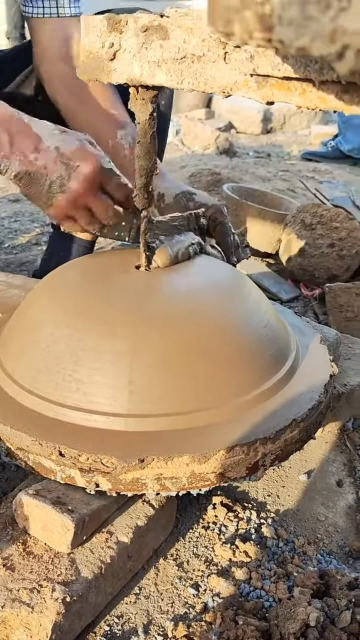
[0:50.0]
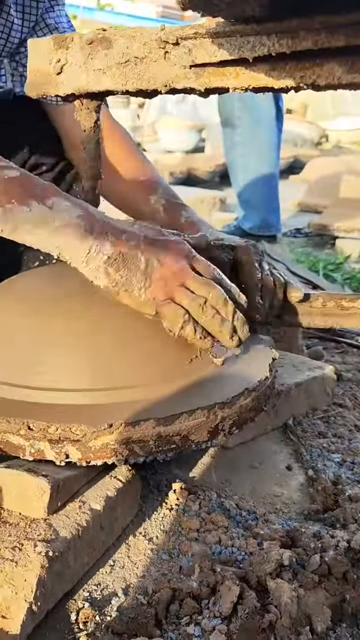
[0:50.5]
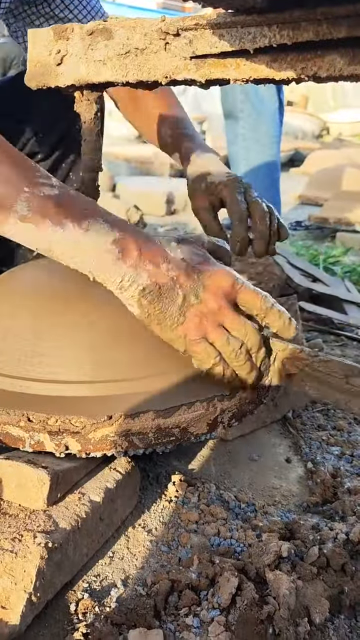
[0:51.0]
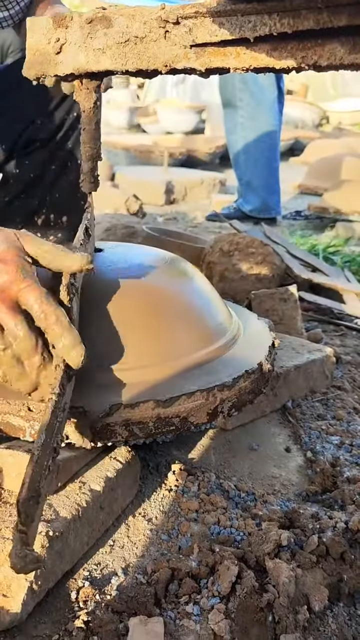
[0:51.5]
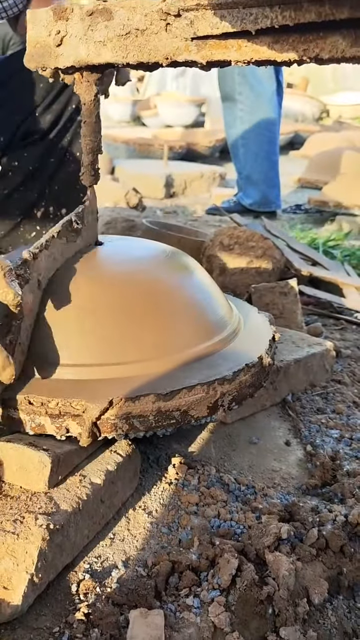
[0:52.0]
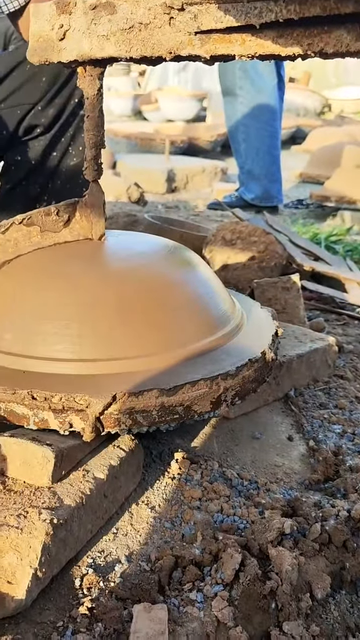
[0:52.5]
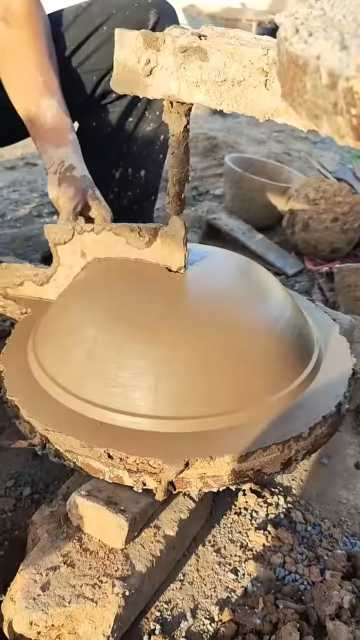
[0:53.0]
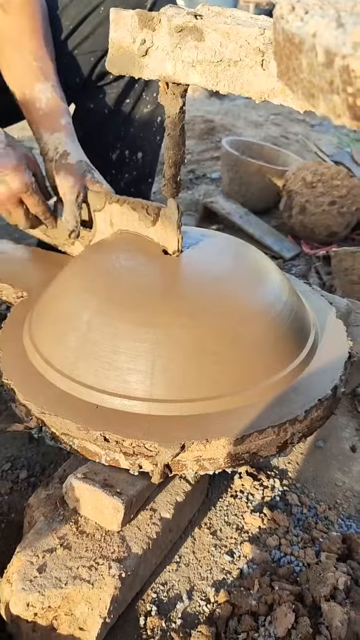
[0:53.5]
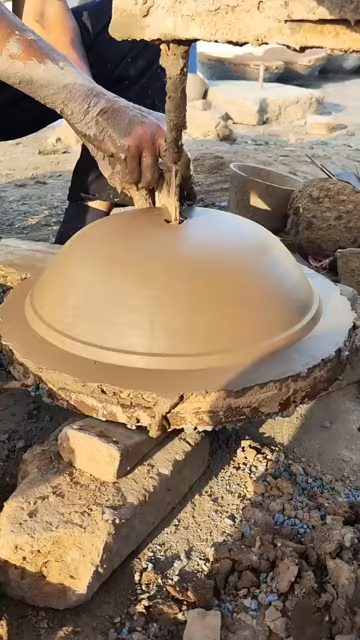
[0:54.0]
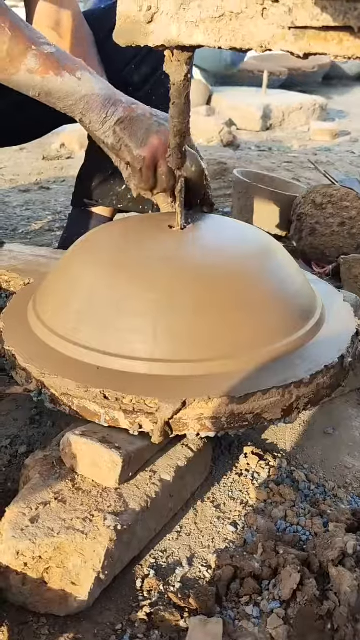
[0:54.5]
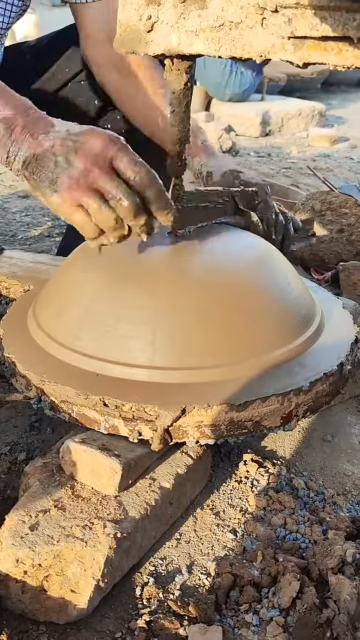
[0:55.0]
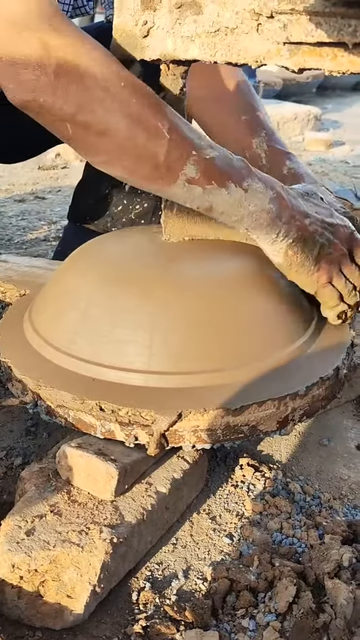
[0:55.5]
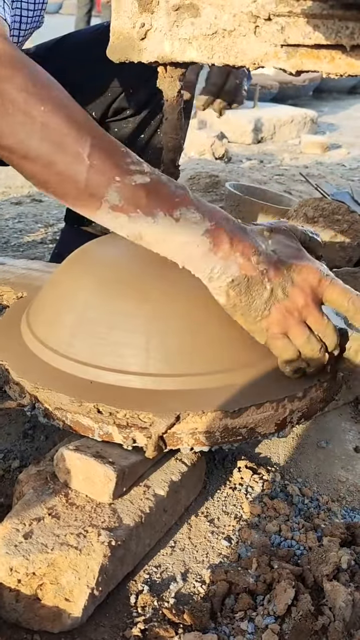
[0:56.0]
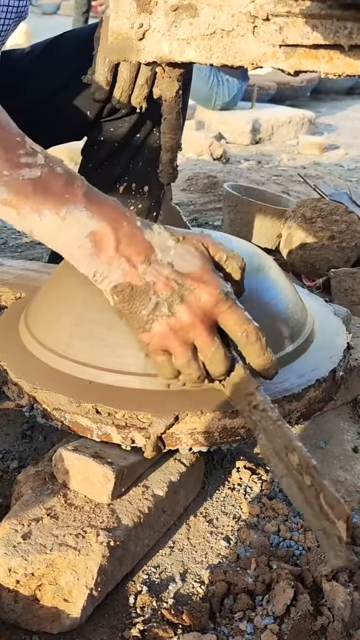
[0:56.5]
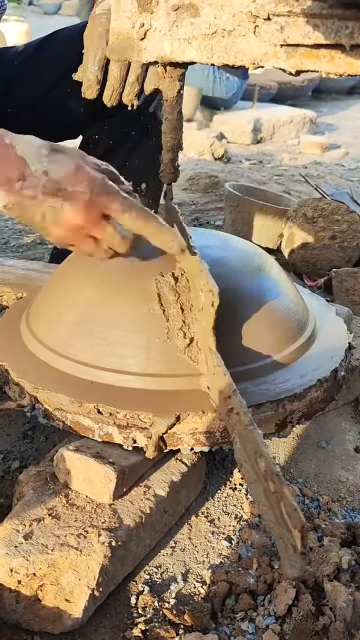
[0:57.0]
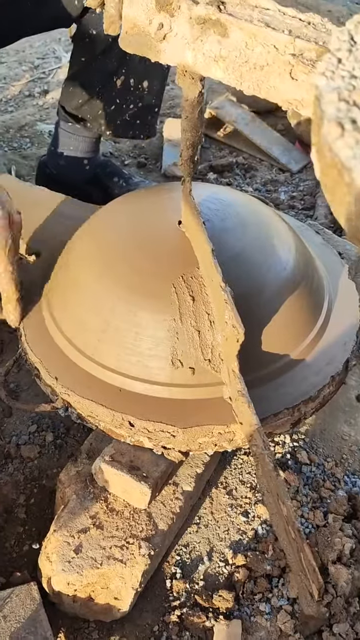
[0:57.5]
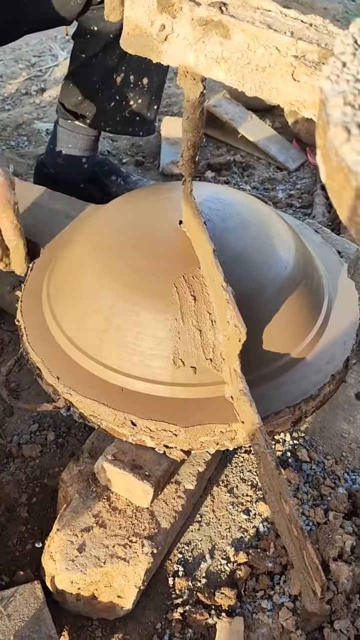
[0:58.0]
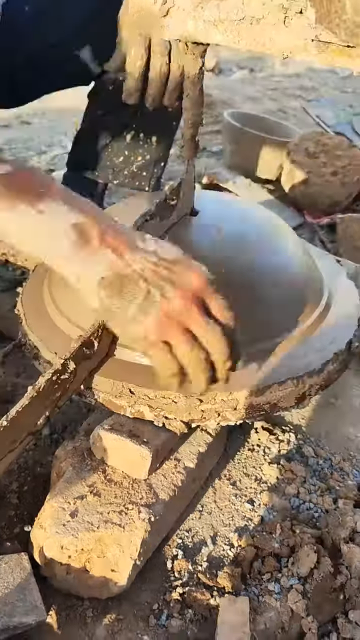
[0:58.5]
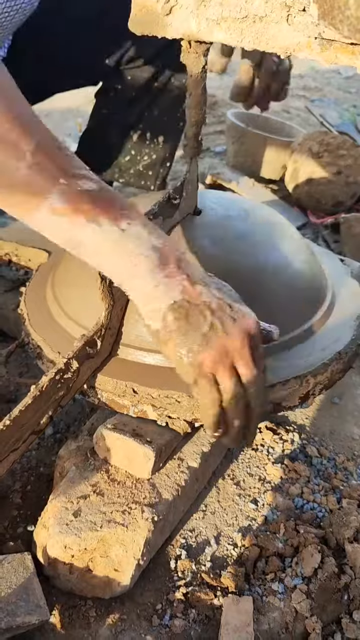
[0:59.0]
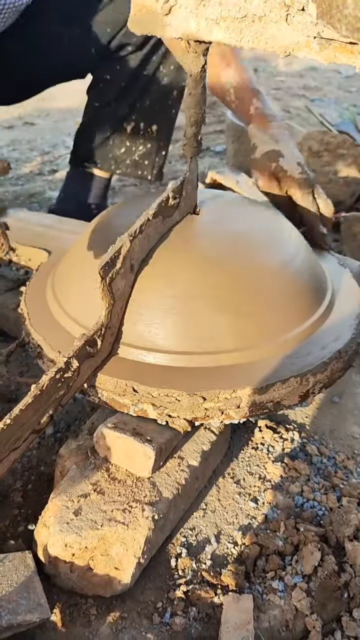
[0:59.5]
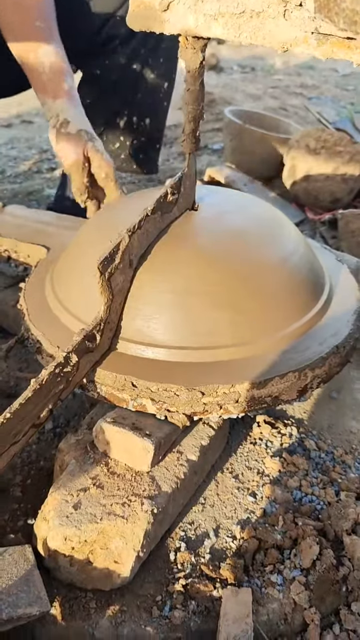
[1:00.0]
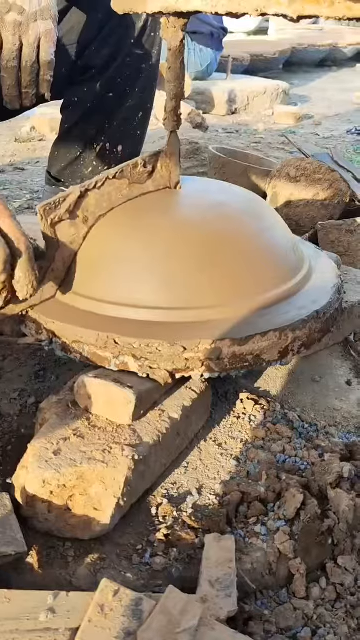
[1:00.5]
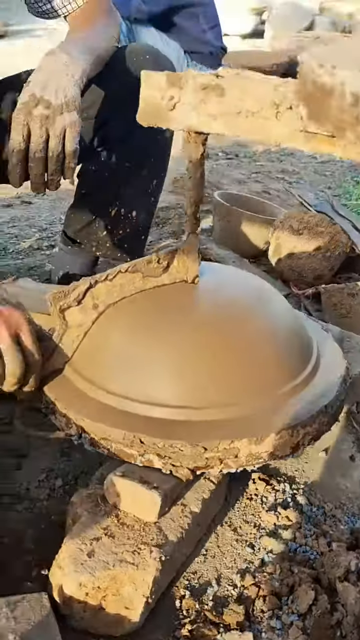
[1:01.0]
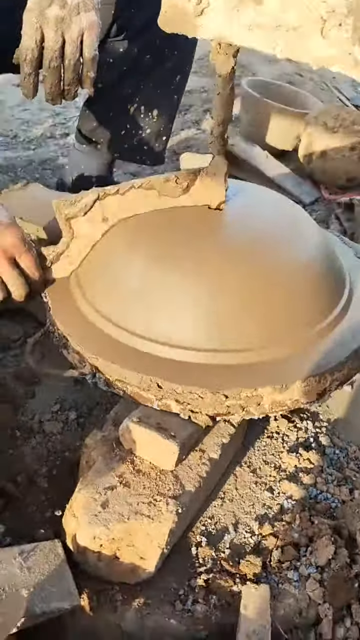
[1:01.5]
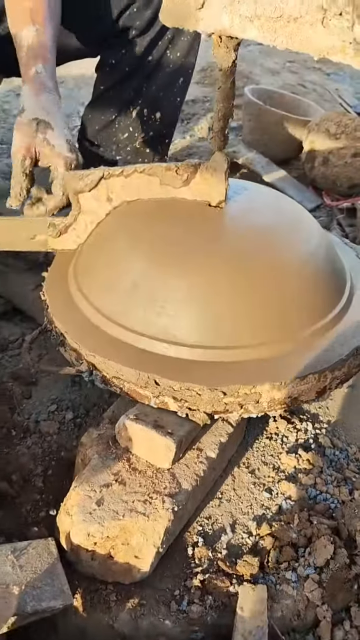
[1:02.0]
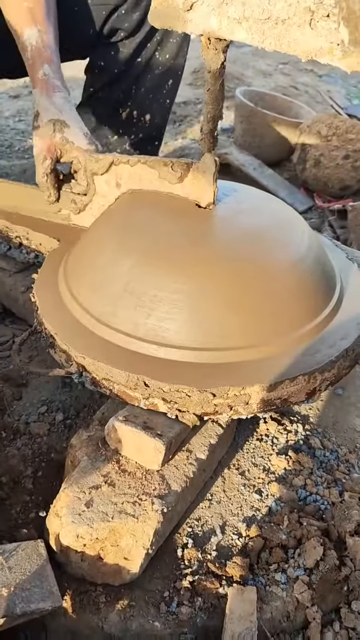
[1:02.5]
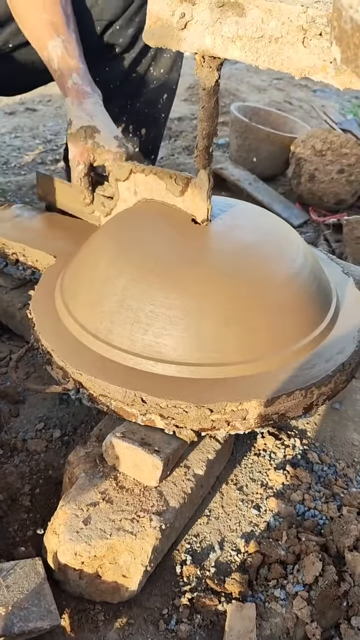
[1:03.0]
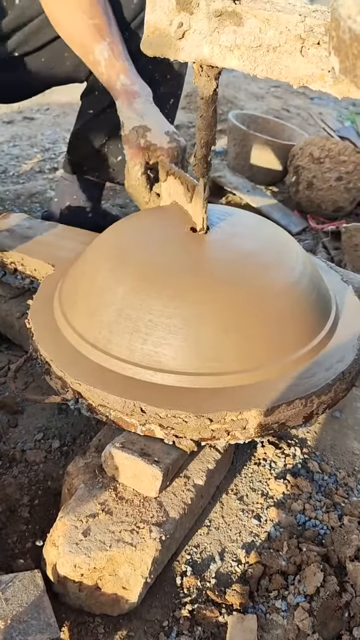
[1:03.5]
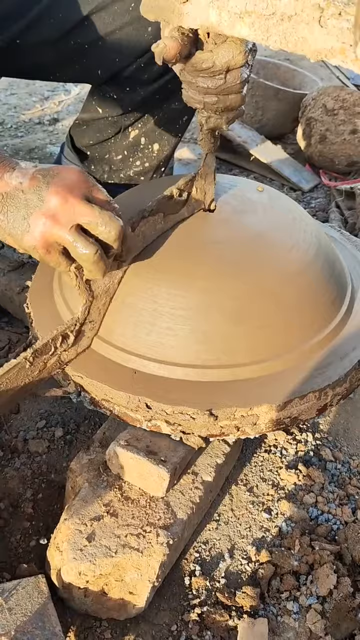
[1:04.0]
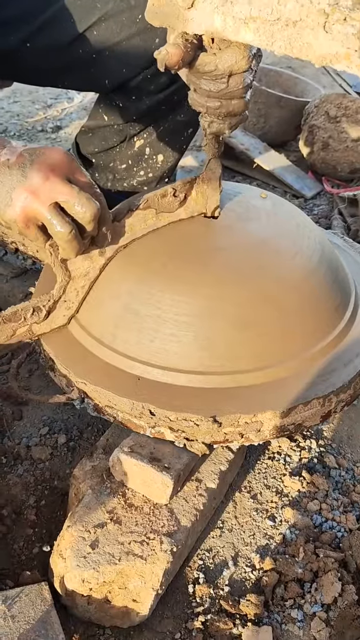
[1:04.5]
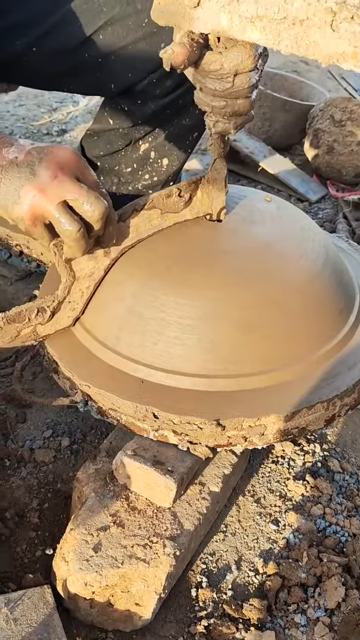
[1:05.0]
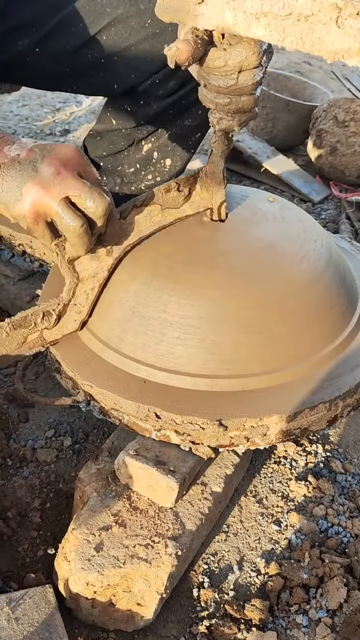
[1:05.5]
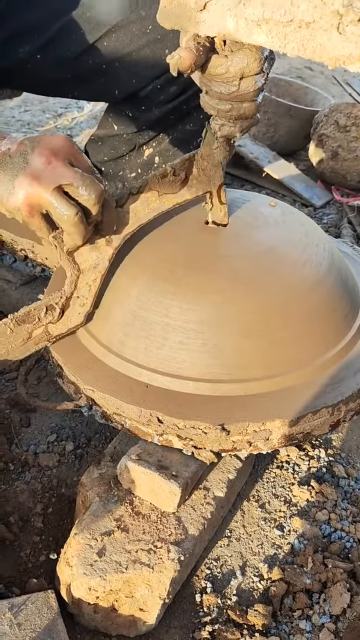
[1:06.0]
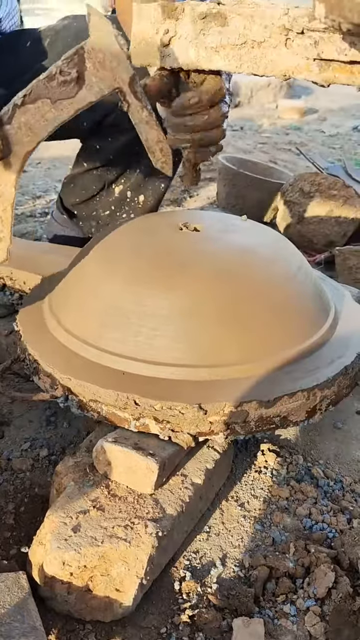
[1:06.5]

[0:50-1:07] The man keeps adding clay to make the sculpture or pot, which appears shaped like a call bell, thicker, while using the tool to smooth the top surface, still spinning it clockwise. He then applies clay to the outer rim. Clay pots are on the floor in the background. His hands are covered in clay up to the forearms. He keeps moving the smoothing apparatus clockwise to remove the excess clay. Finally he takes out the protractor-looking tool, leaving a smooth surface on the clay pot. The setting appears to be daytime in a clay workshop.